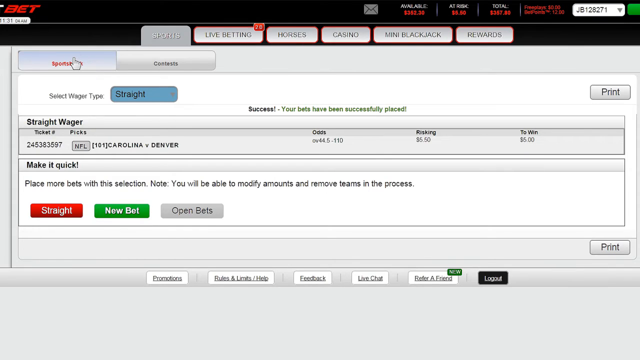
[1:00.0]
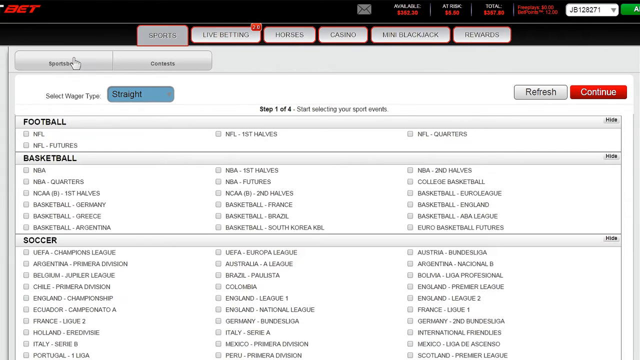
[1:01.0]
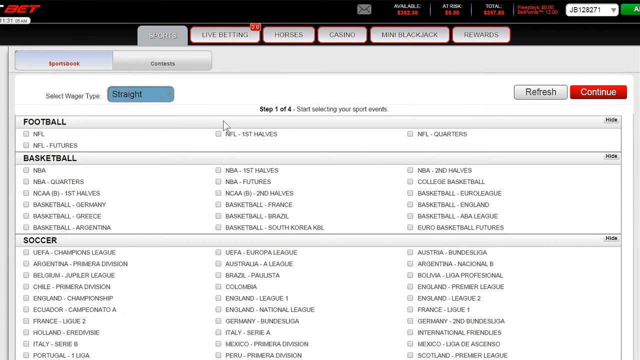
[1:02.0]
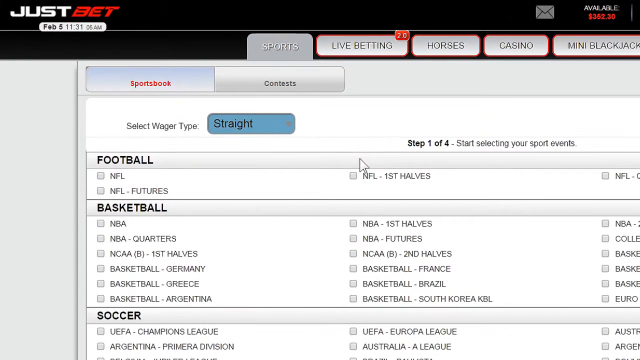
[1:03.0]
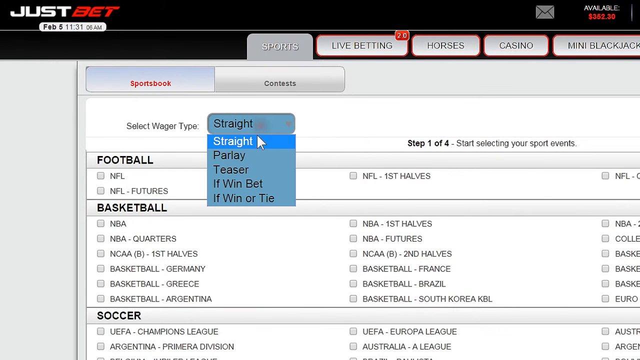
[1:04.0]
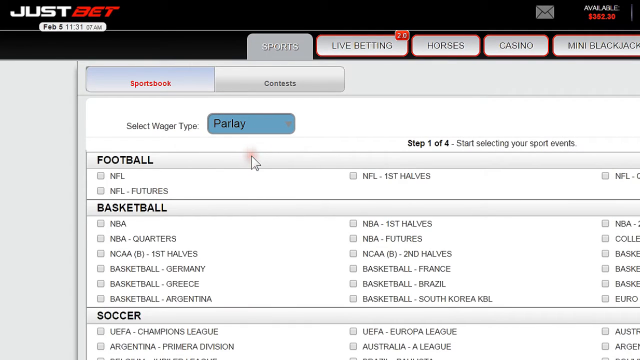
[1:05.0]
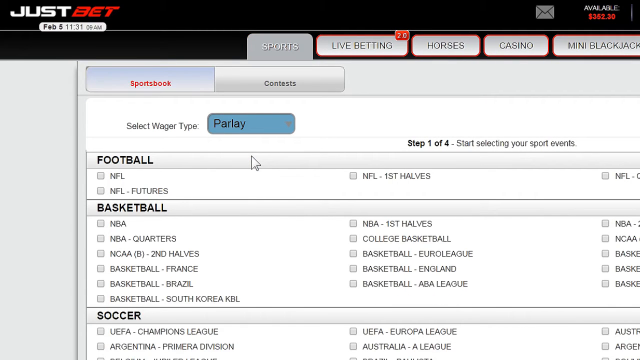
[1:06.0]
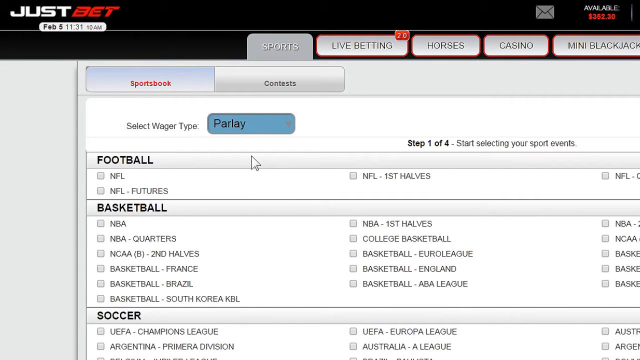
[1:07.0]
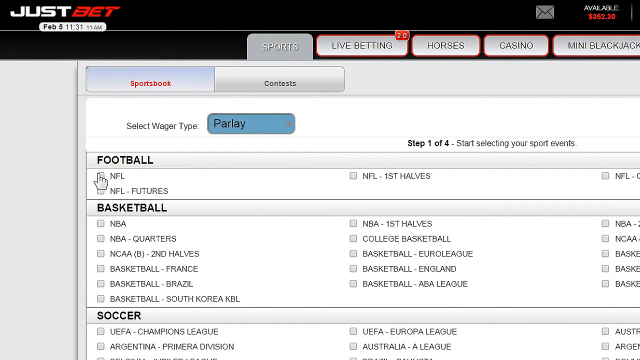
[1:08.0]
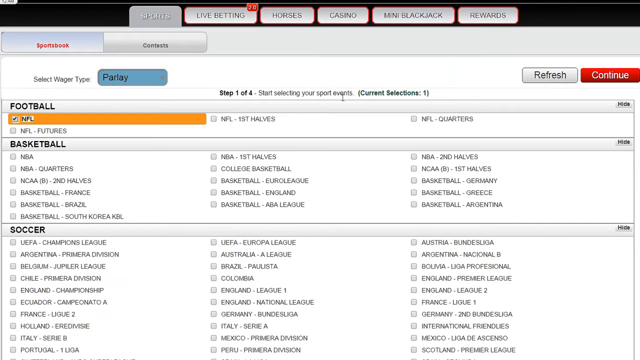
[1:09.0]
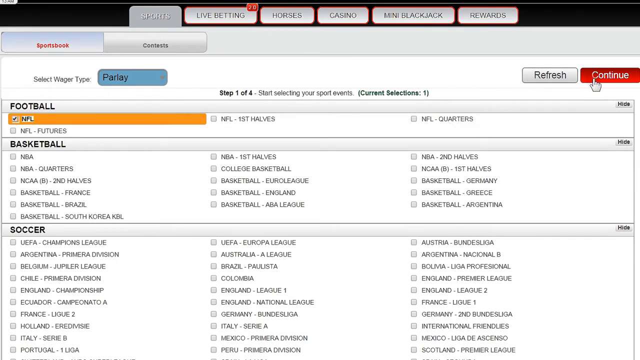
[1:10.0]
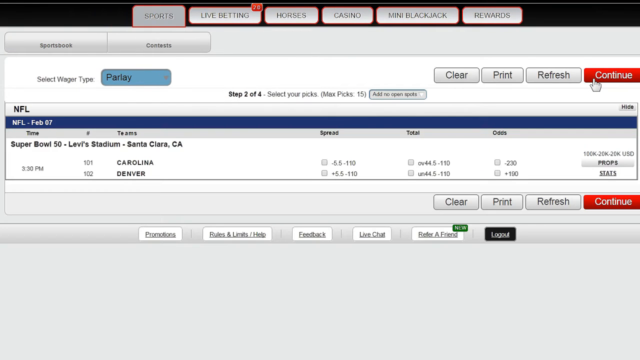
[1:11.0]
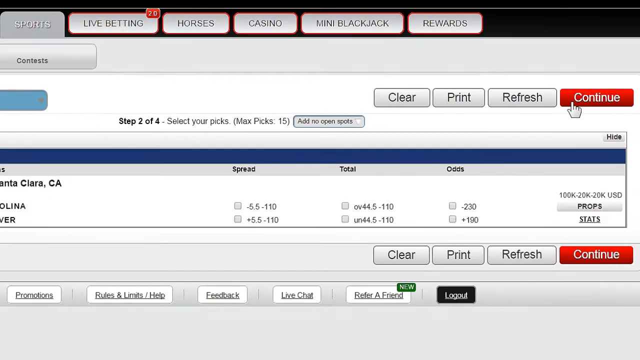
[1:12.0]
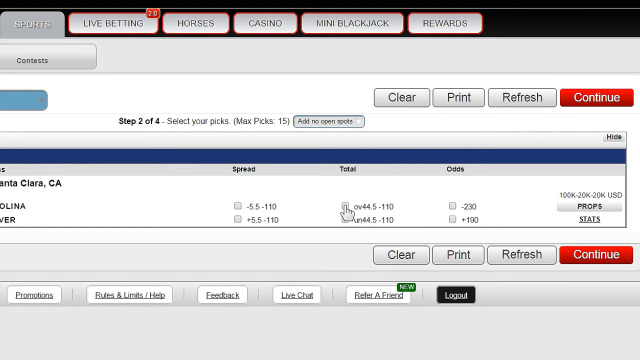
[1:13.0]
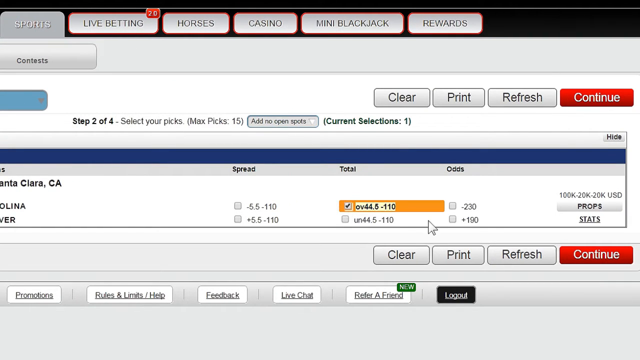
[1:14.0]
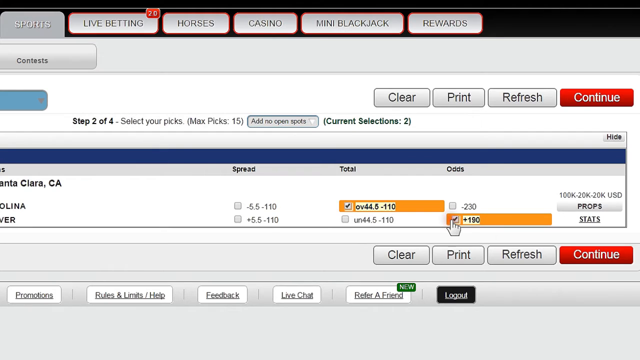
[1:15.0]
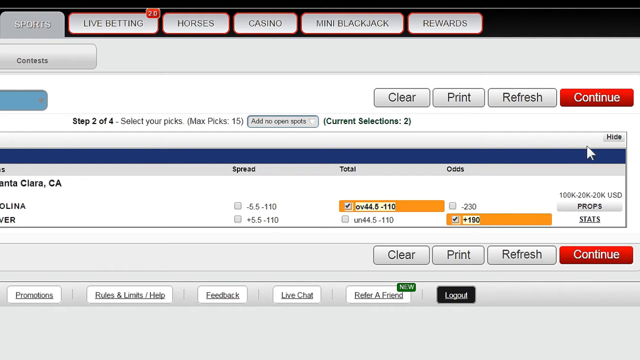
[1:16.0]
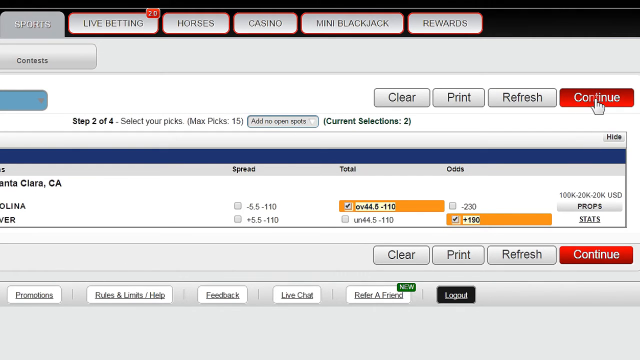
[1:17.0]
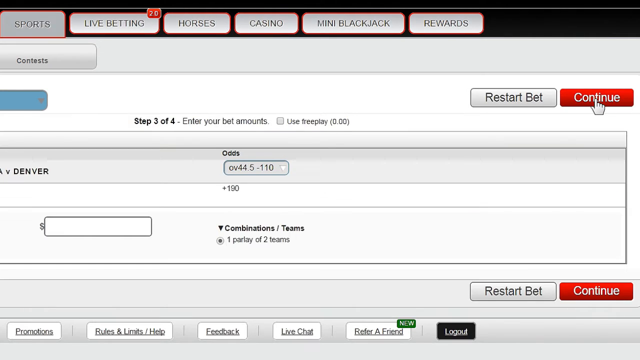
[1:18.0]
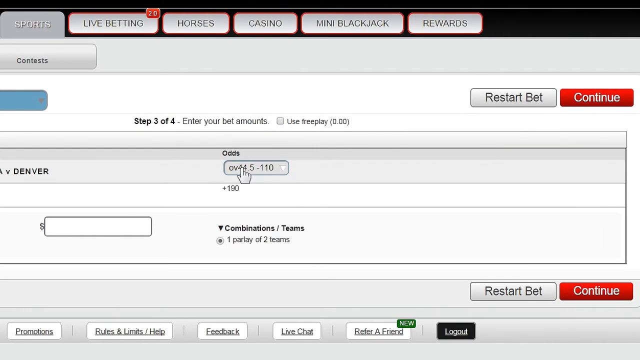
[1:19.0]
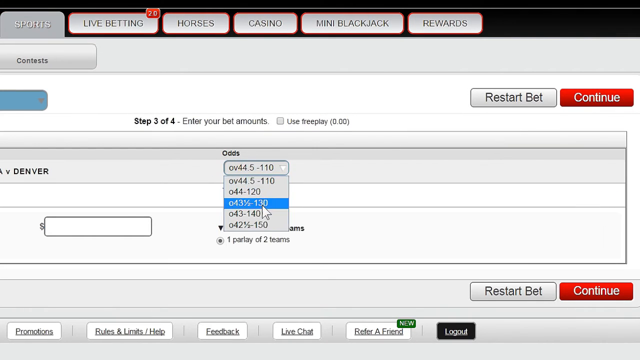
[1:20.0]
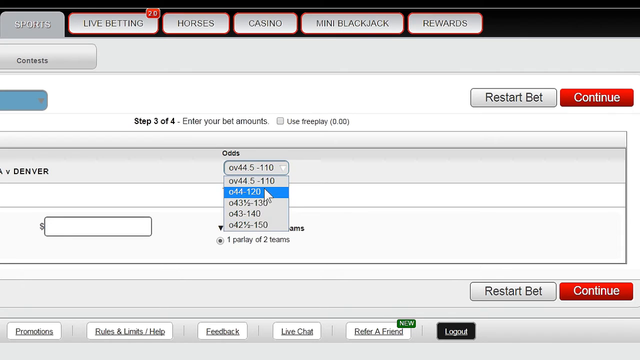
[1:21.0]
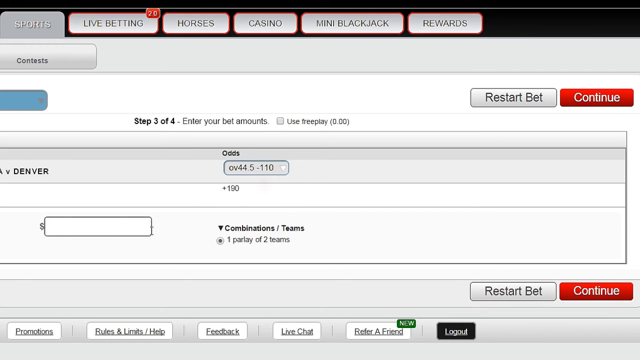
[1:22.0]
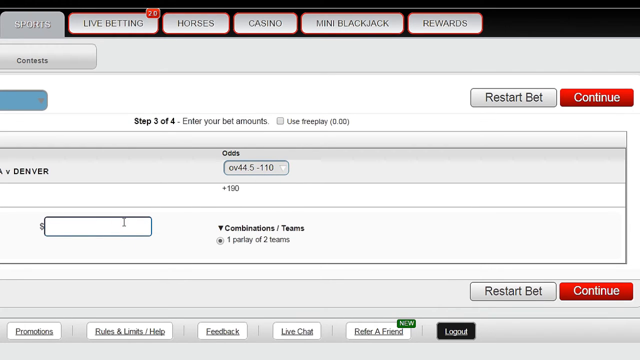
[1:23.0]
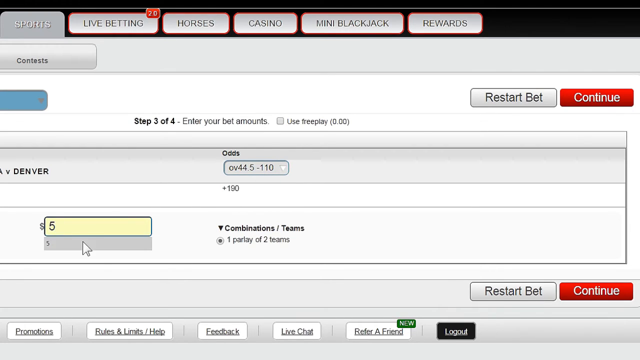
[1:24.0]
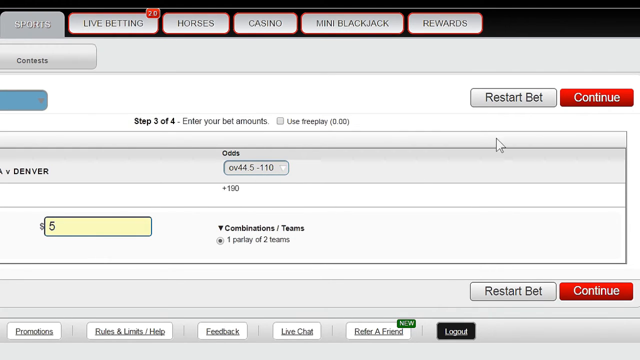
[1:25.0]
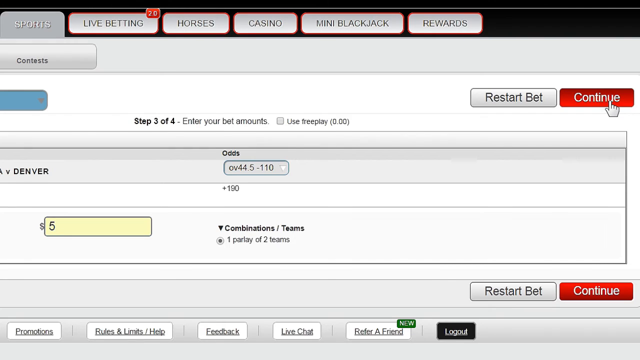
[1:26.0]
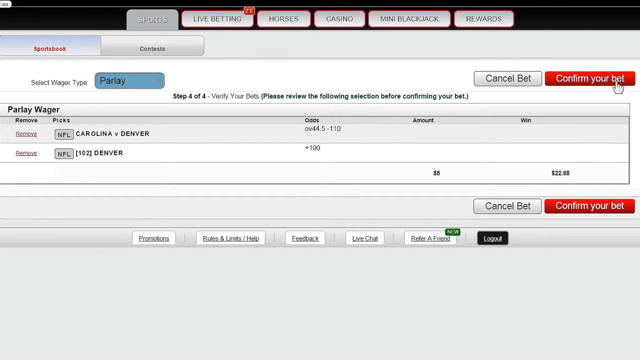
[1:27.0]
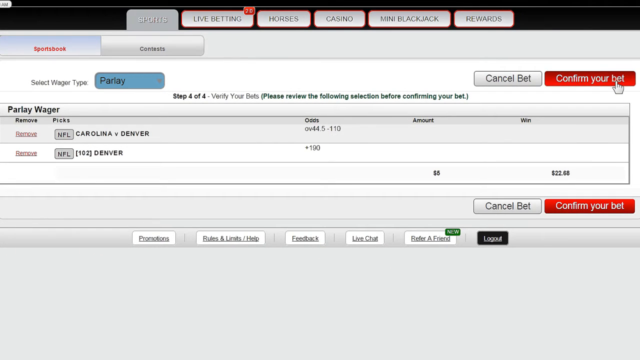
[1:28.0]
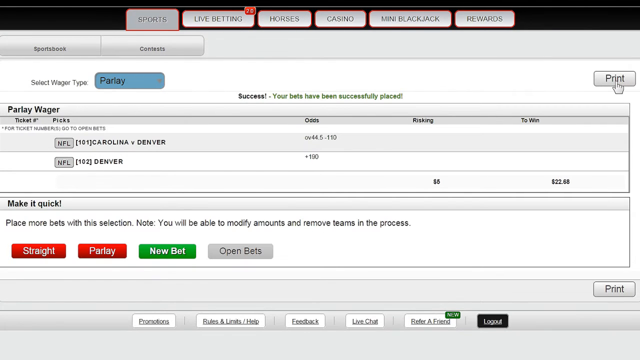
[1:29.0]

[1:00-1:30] On a live betting website, someone clicks "parlay" in a blue bar, selects NFL, and clicks continue, which is red. They click the total and the odds, then continue. They change the odds, enter a dollar amount of $5, and hit continue. The parlay then goes back to straight. Buttons in bars at the bottom read "straight," "new bet" and "open bets." There is a print button both at the top and at the bottom. In the middle of the screen, "success" appears in green, with "Your bets have been successfully placed." Along the top are "live betting," "horses," "casino," "blackjack" and "rewards."